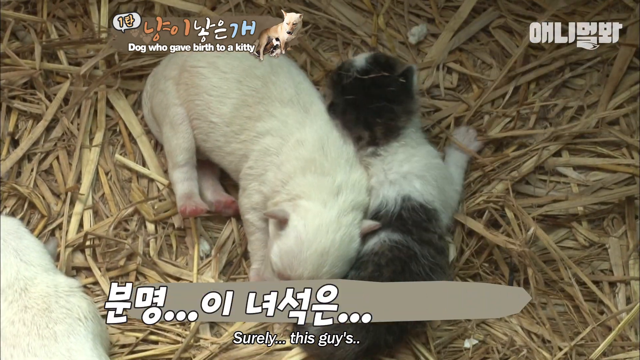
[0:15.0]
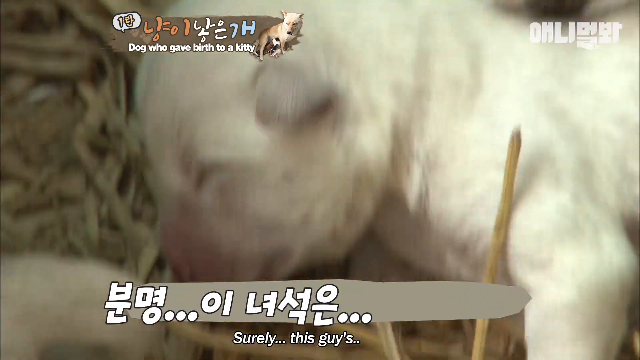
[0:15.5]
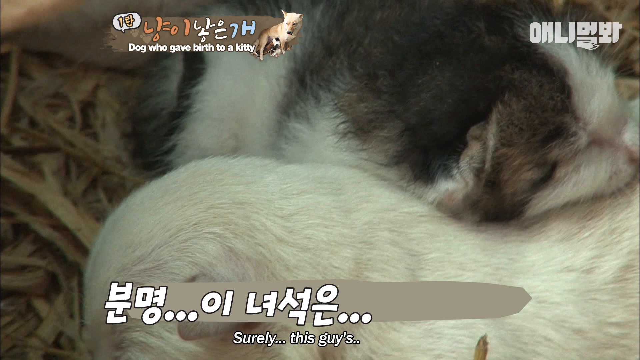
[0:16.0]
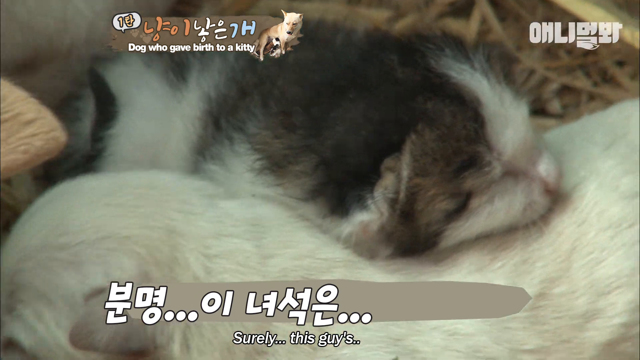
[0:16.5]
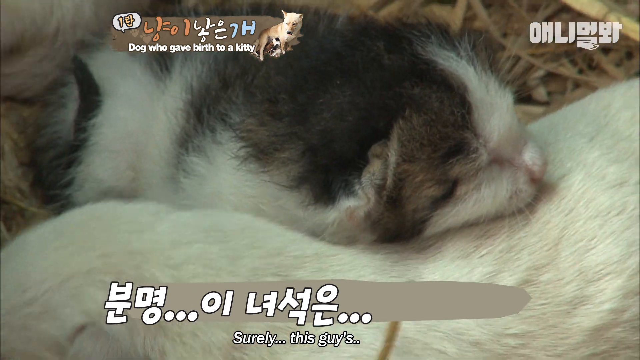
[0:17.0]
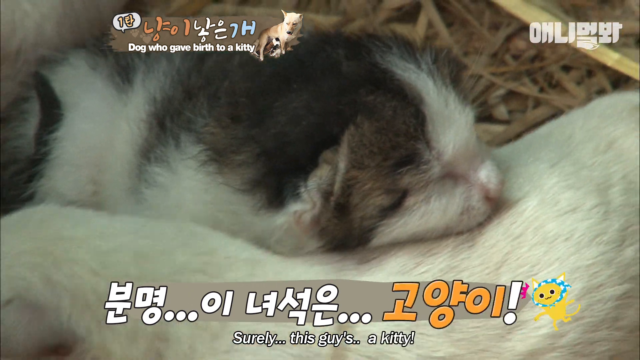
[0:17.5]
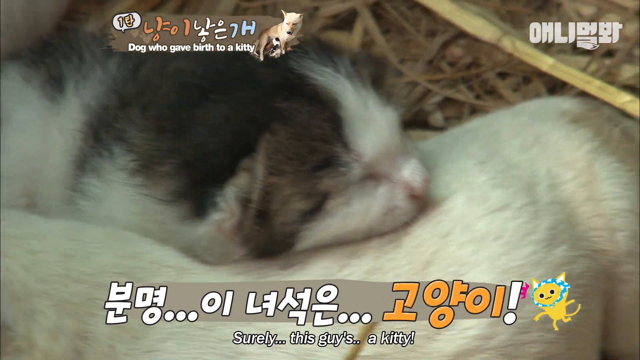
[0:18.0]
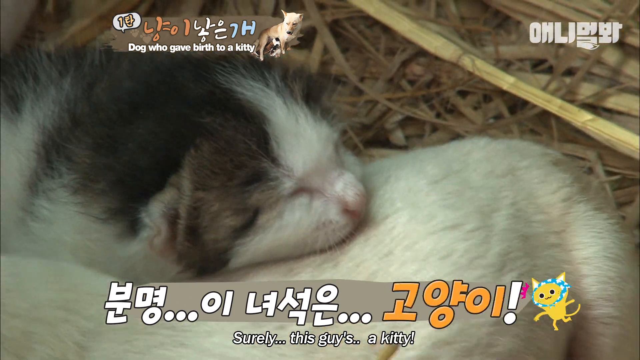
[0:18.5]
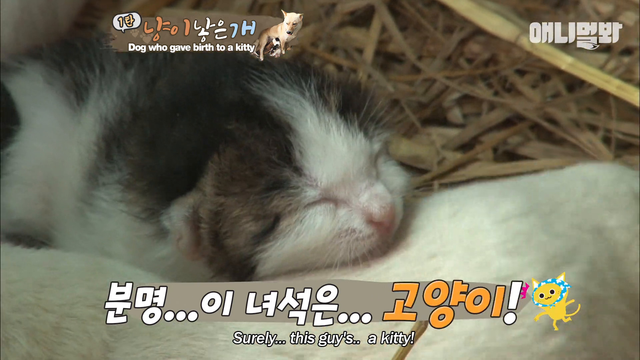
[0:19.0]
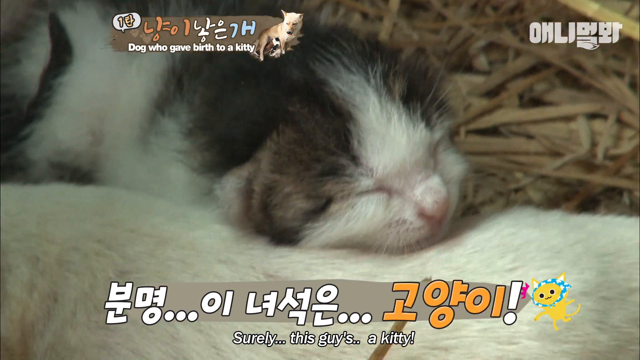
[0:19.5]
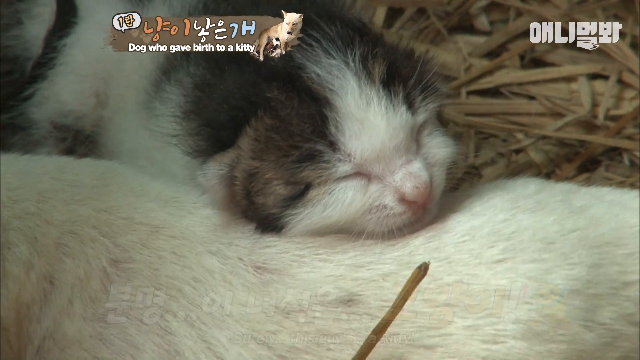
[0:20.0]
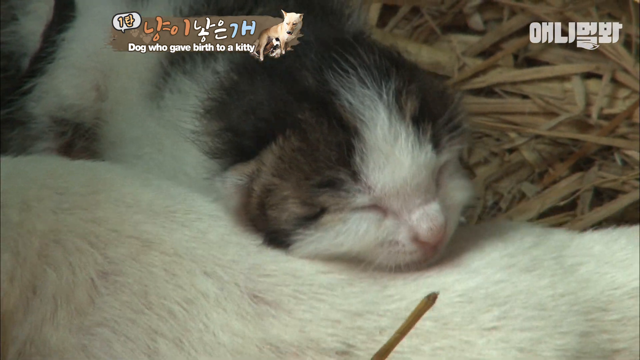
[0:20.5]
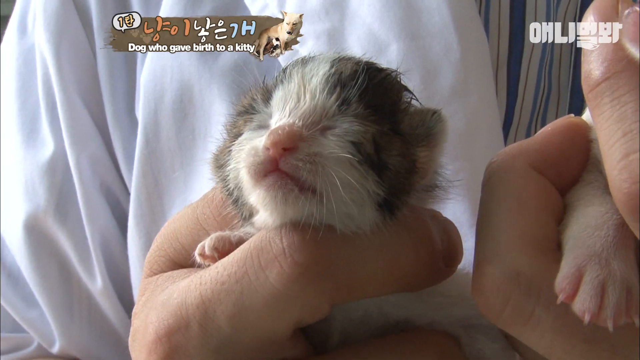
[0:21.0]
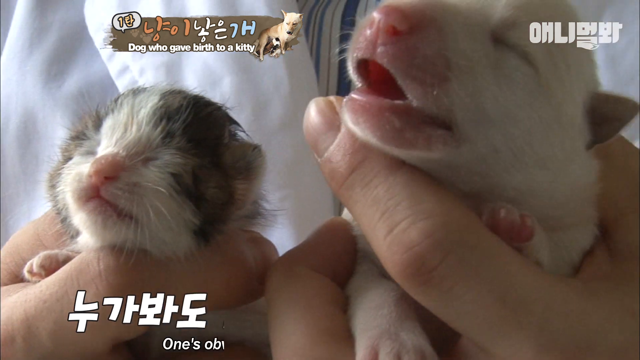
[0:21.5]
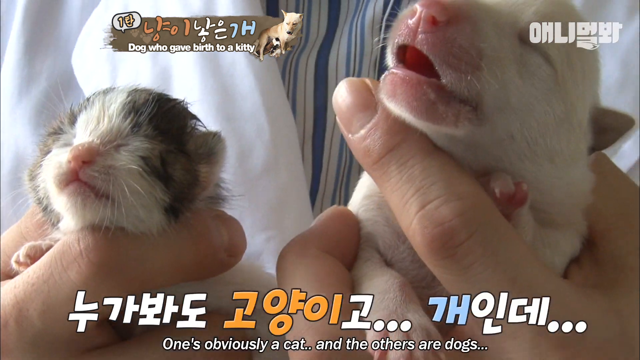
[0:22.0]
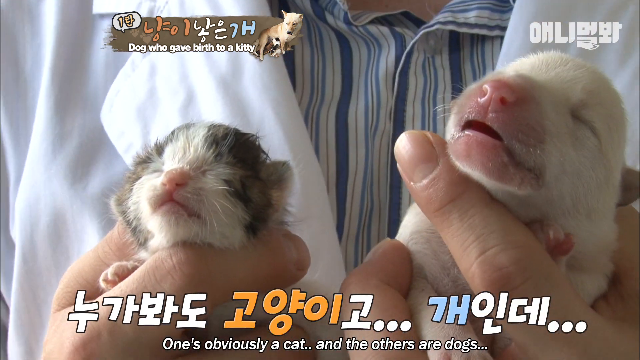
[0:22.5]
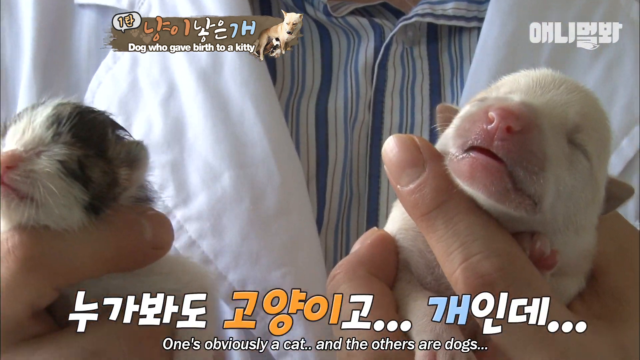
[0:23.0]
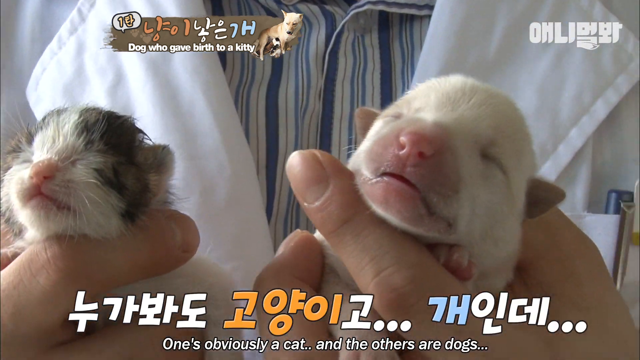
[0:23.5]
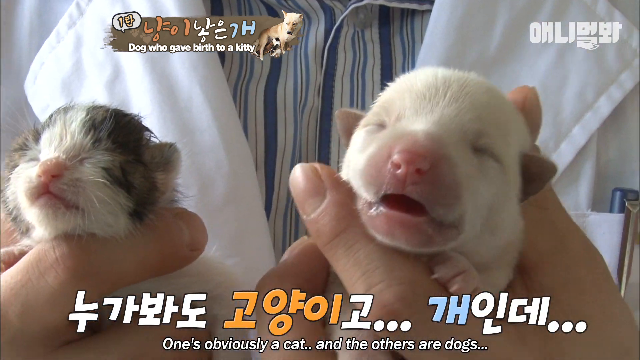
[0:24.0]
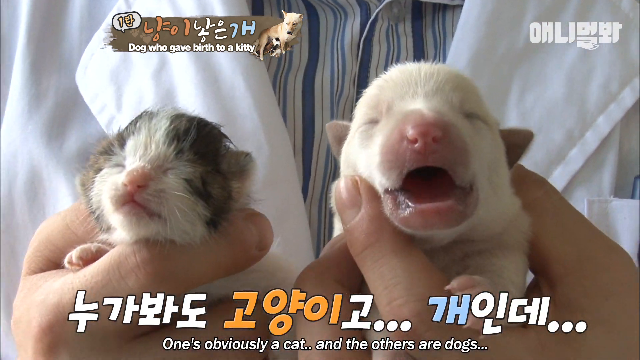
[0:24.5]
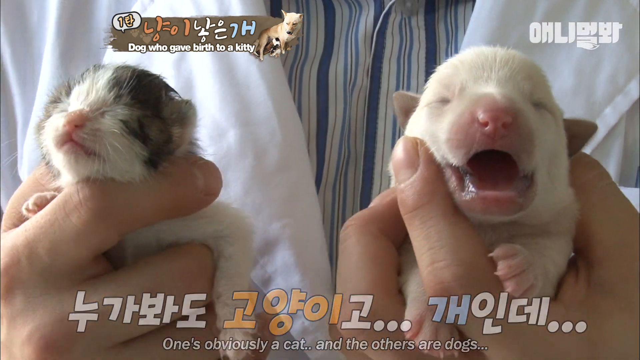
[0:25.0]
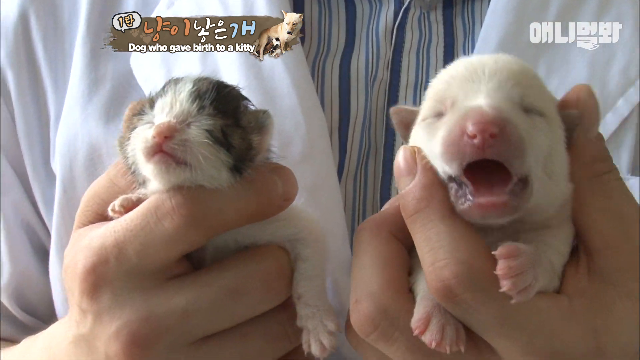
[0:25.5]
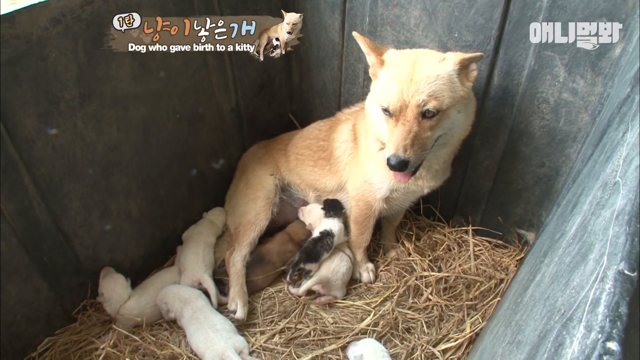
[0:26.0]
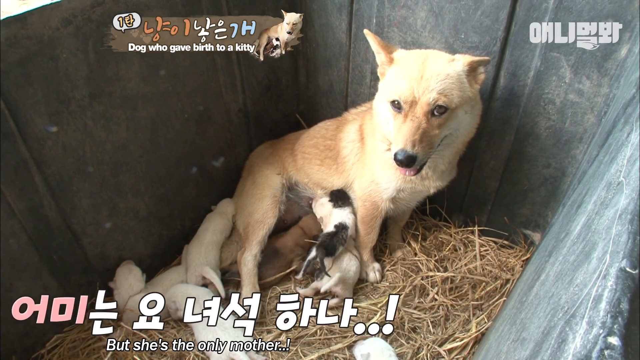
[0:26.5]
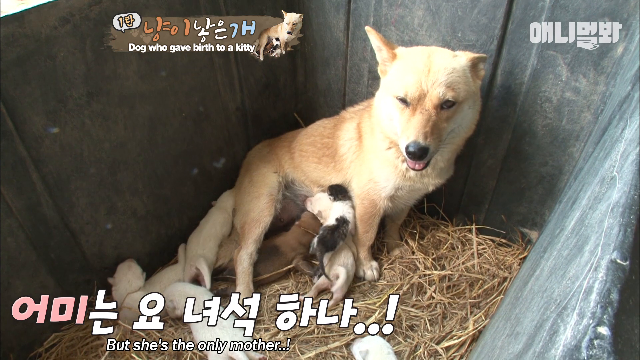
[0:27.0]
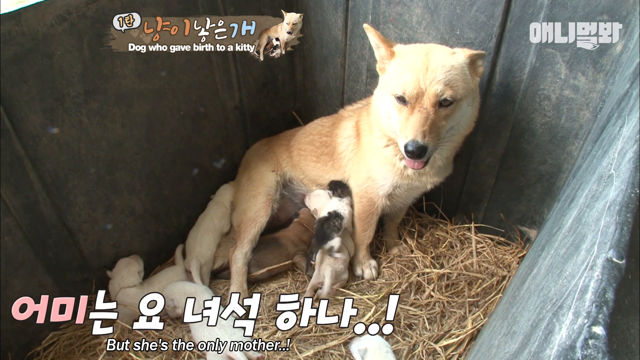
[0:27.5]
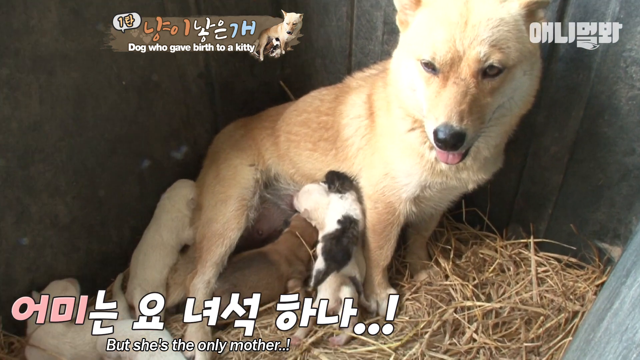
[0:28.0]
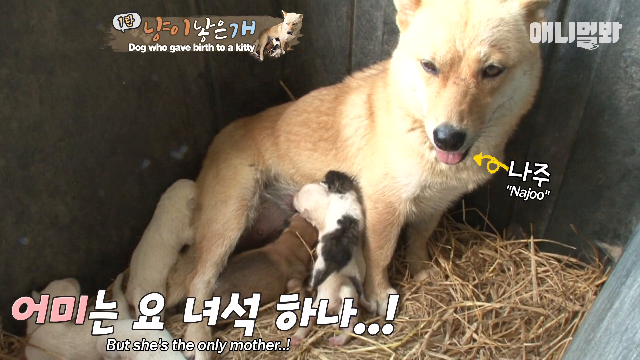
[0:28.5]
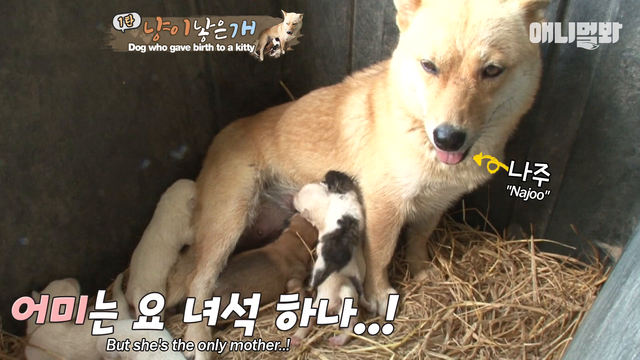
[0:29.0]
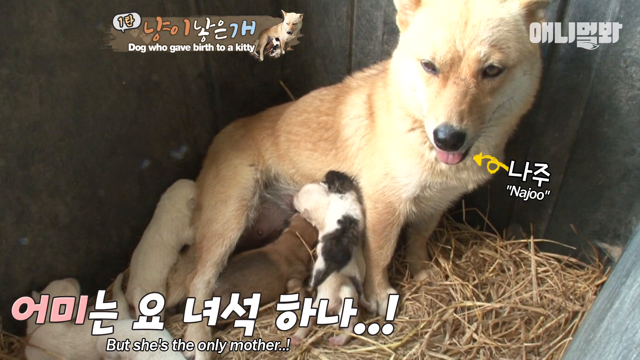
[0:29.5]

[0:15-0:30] Very young, small kittens and puppies are in straw bedding in what appears to be a dog house. They move around, and some of them sleep on each other. One looks like it is trying to suck on another. An adult dog sits with them while some of its puppies apparently suckle it to feed. For part of the video the shot switches to what appears to be a doctor in a white lab coat holding one of the kittens and one of the puppies up for the camera. Chinese subtitles appear throughout, probably describing what is shown. The setting otherwise does not change, showing different aspects of the young animals.